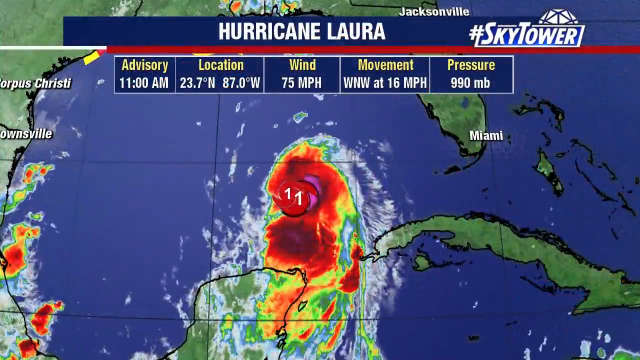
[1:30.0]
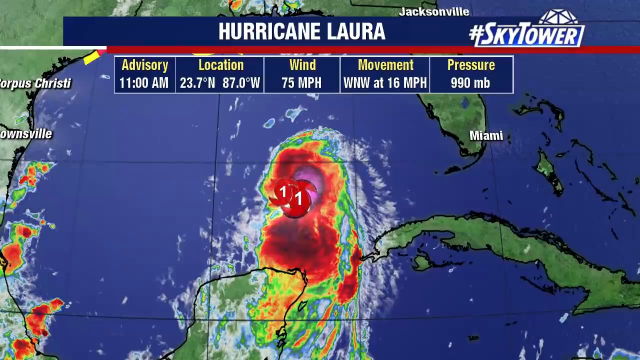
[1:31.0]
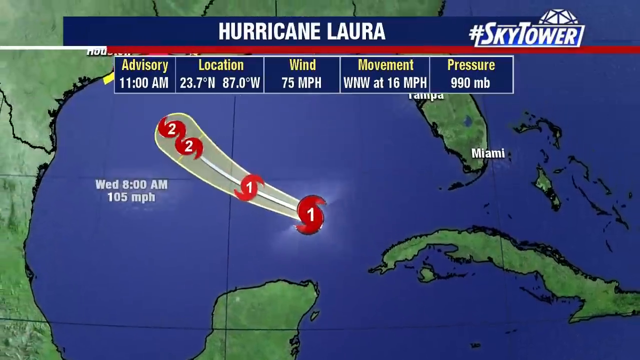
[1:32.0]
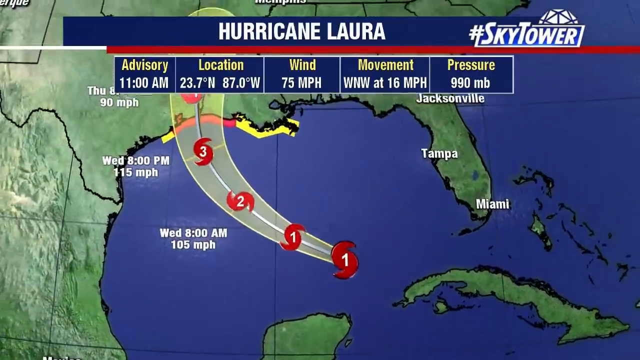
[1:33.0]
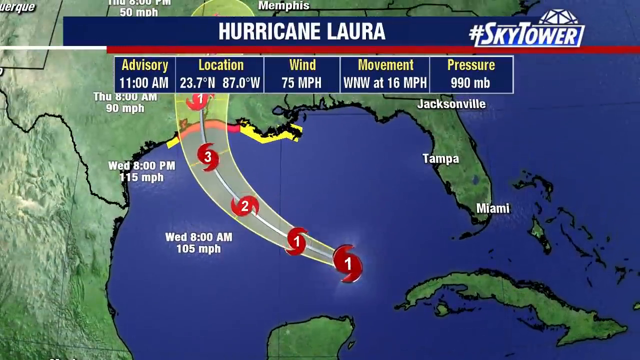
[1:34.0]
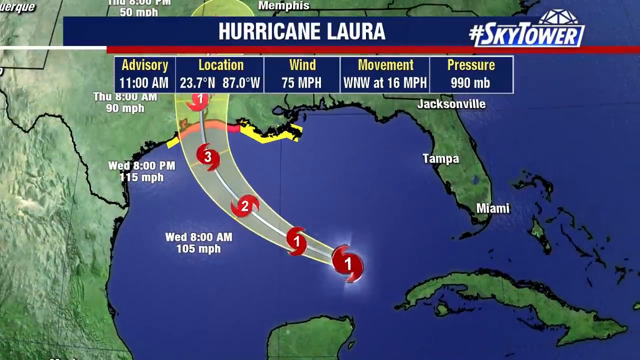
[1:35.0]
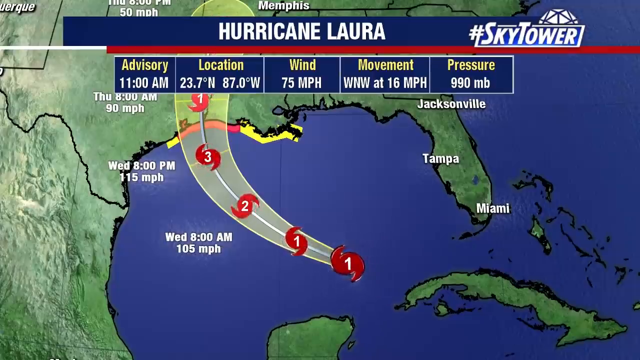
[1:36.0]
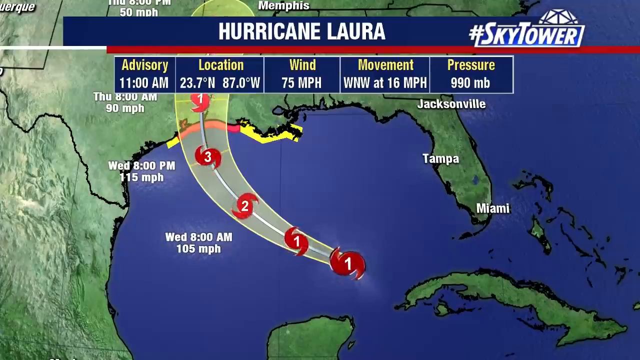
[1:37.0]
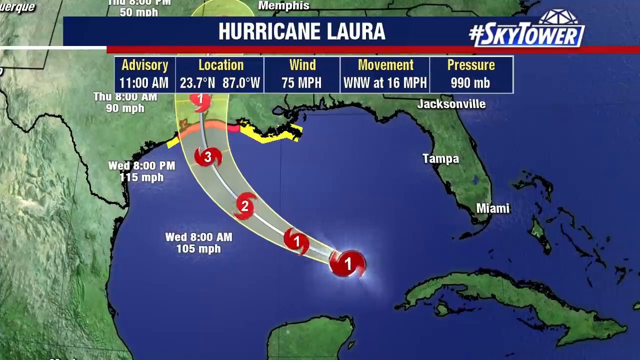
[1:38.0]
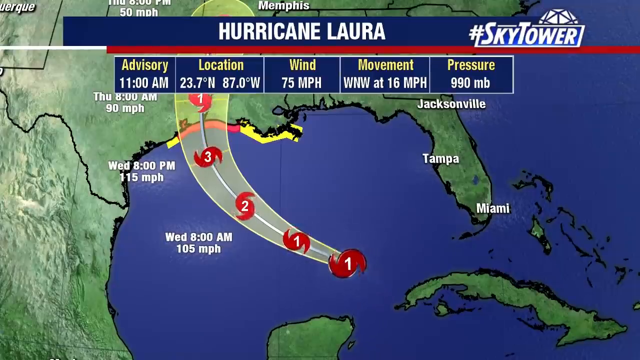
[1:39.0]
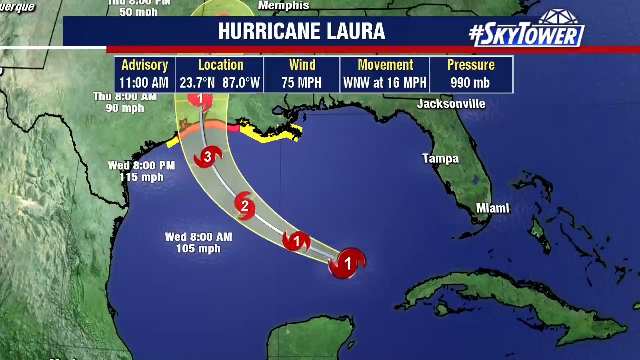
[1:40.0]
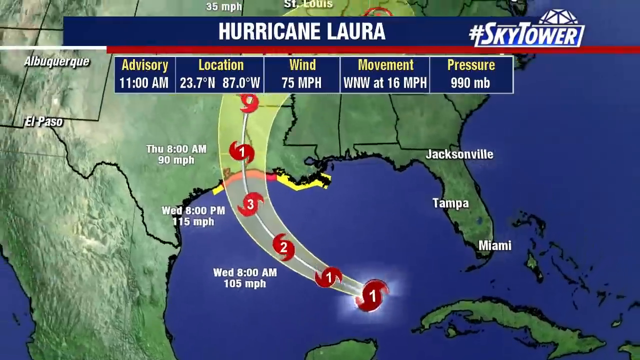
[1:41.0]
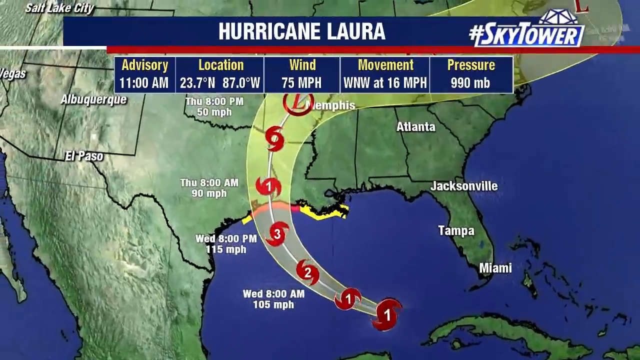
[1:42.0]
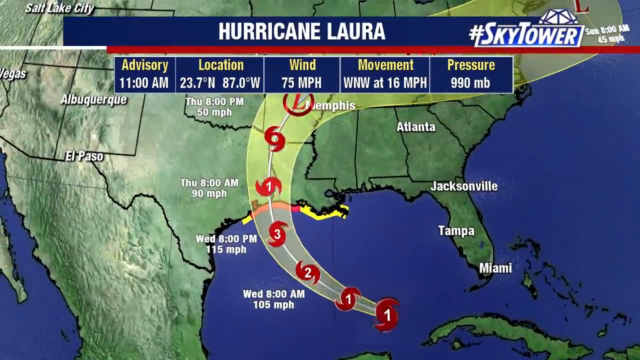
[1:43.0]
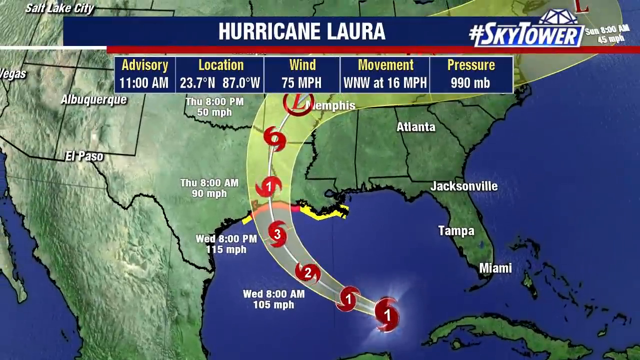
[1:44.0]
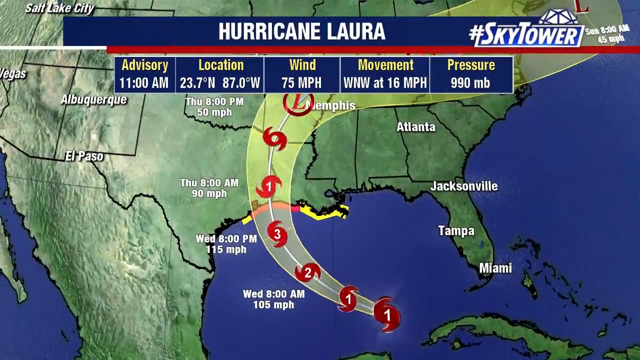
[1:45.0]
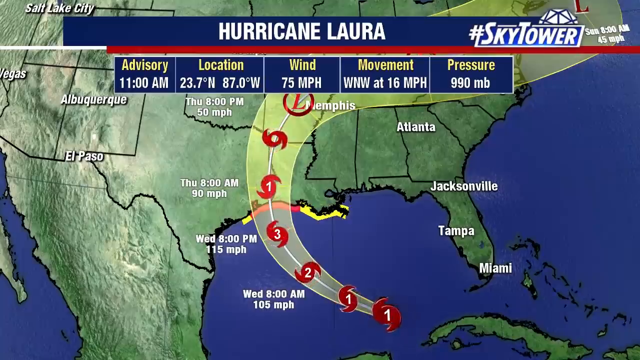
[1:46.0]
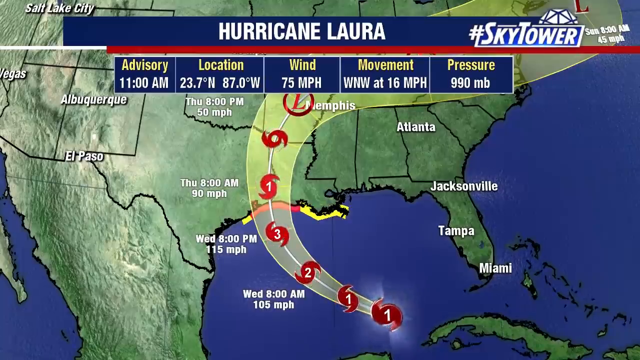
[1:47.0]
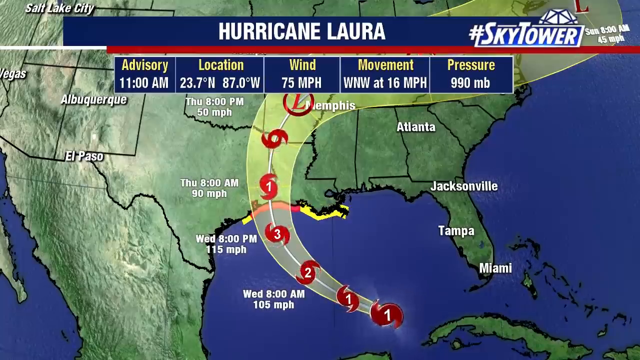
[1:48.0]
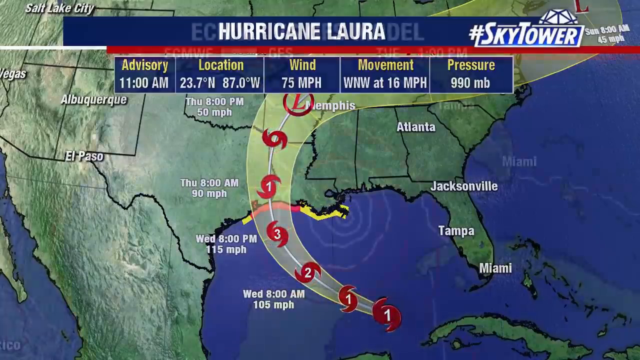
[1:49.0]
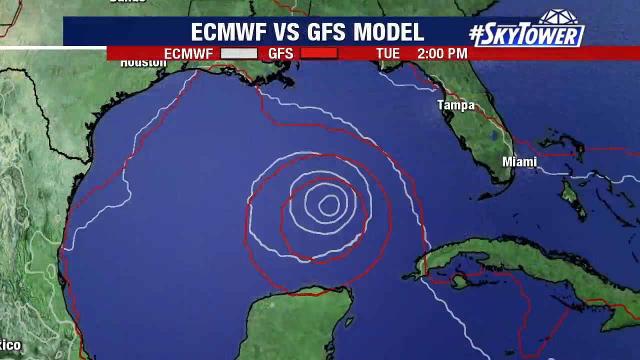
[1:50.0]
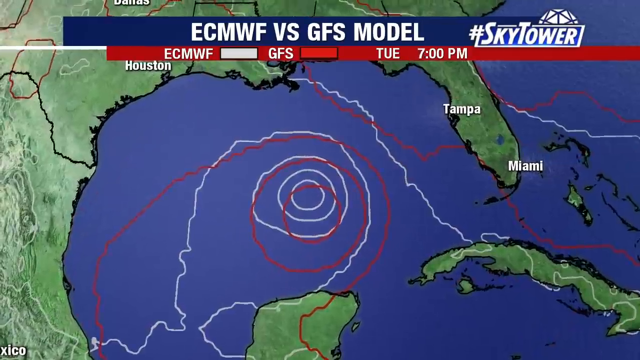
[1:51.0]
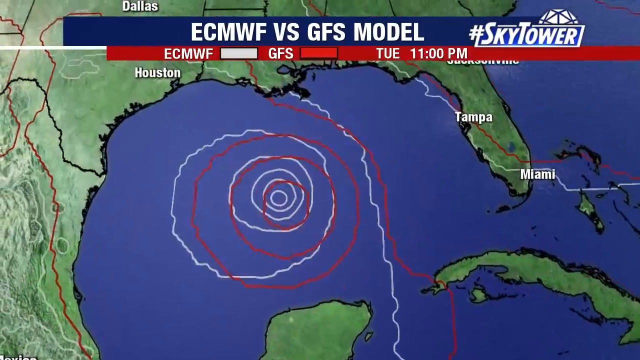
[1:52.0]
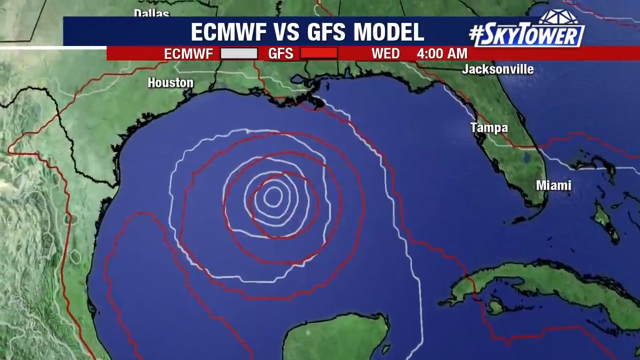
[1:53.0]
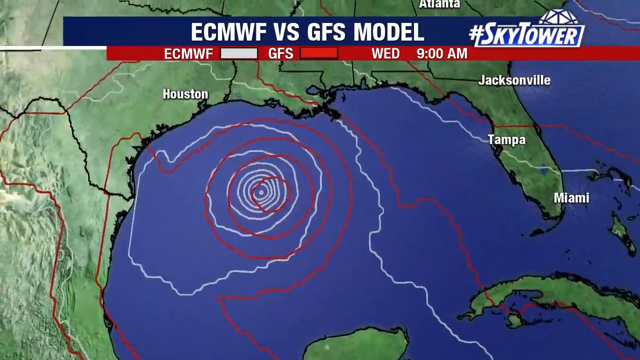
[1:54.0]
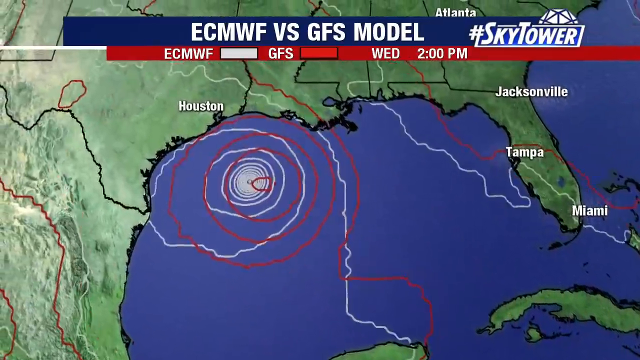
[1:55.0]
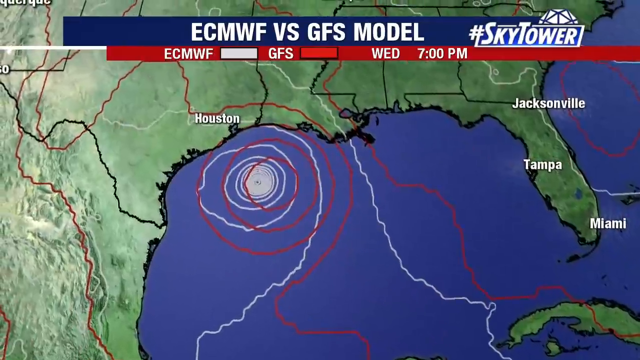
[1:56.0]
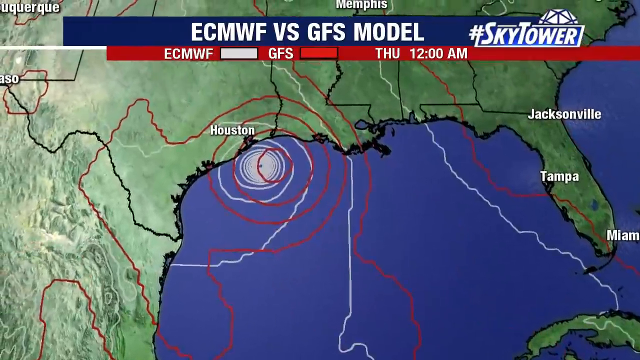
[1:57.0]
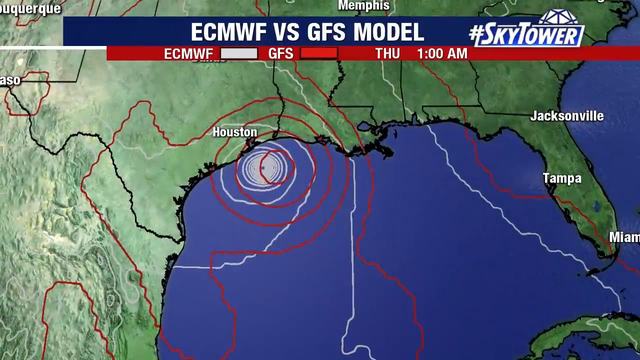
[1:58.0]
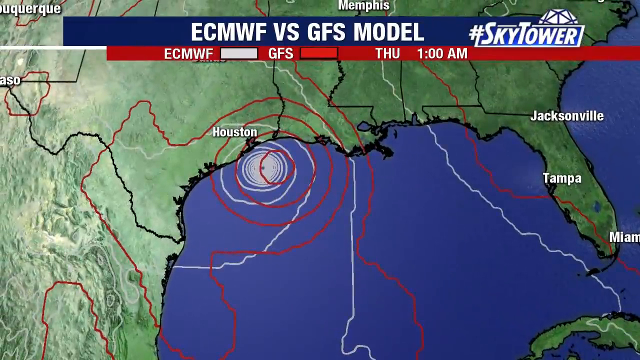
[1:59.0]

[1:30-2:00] The characteristics of Hurricane Laura are shown: an advisory as of 11 a.m., a location off the coast of Cozumel and Cancun, Mexico, winds of 75 miles per hour, movement west-northwest at 16 miles per hour, pressure of 999 mb, and Category 1 status. A projected path is then shown over the Cozumel and Cancun area. Moving west-northwest, it is shown becoming a Category 2 as it heads toward Houston, and possibly reaching Category 3 by the time it gets there. The projection has it at Category 2 on Wednesday at 8 a.m. with winds of 105 miles per hour, and by 8 p.m. Wednesday closer to the Texas coast with winds of 115 miles per hour. After reaching land it drops back to a Category 1, and by the coast of Louisiana it is spinning but no longer has a category, with a low pressure there. The path continues up through Memphis, Tennessee, and other areas of the United States, and the tip of North Carolina will probably get some rain. Two models are compared, ECMWF versus GFS, with slightly different paths; one is red and one is white.